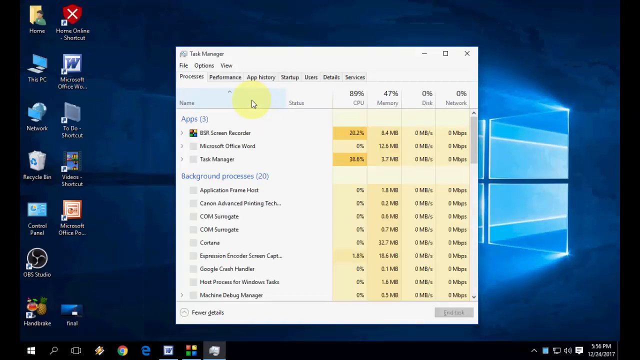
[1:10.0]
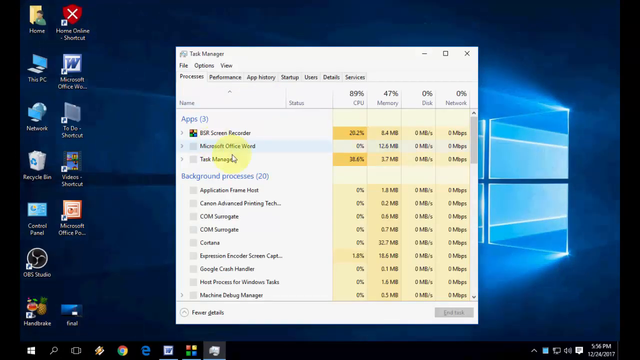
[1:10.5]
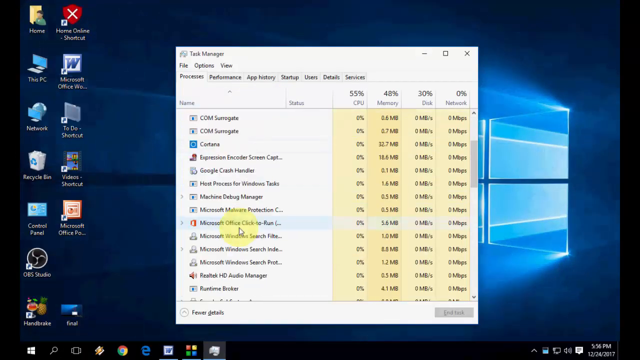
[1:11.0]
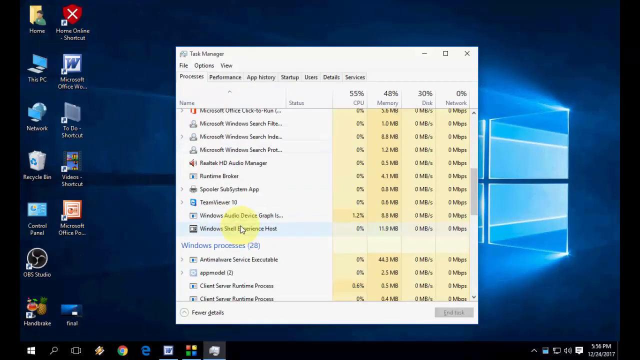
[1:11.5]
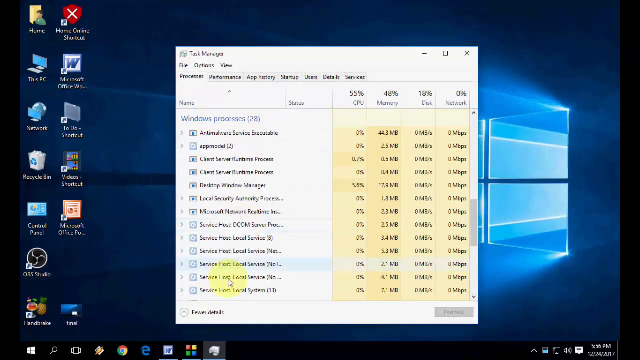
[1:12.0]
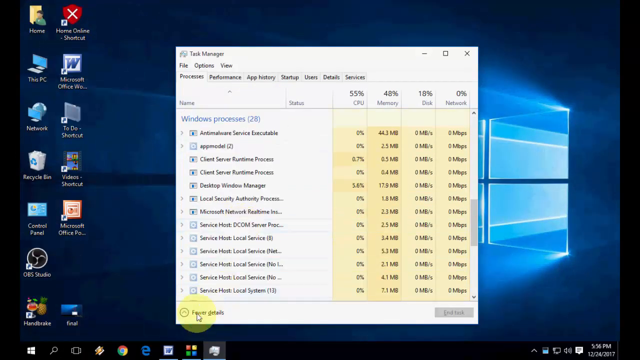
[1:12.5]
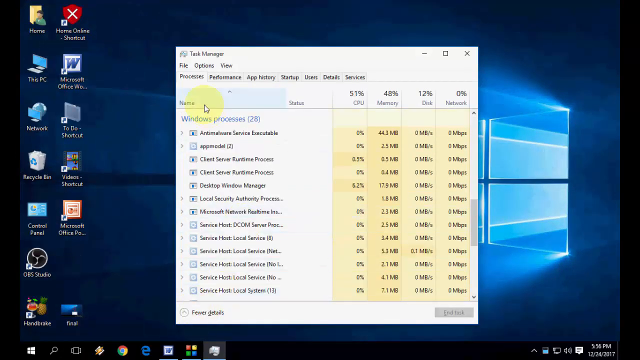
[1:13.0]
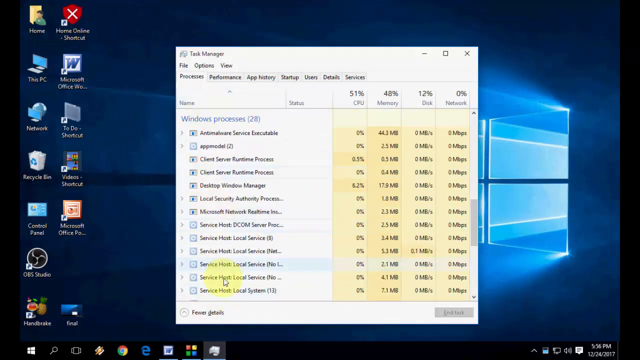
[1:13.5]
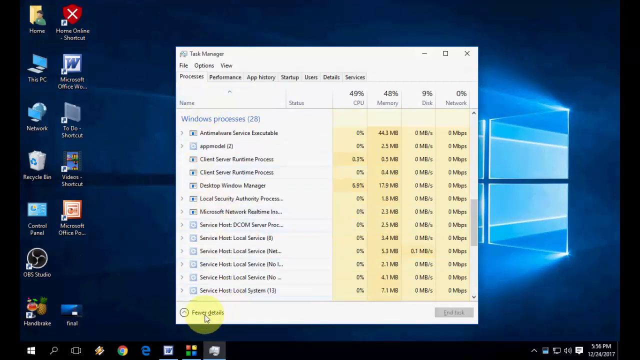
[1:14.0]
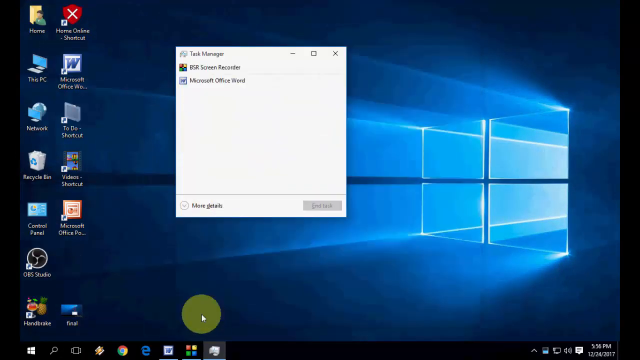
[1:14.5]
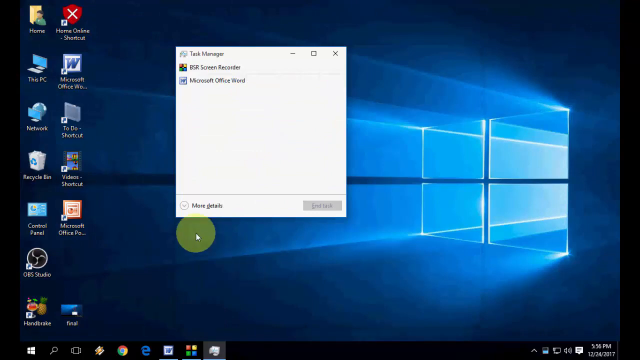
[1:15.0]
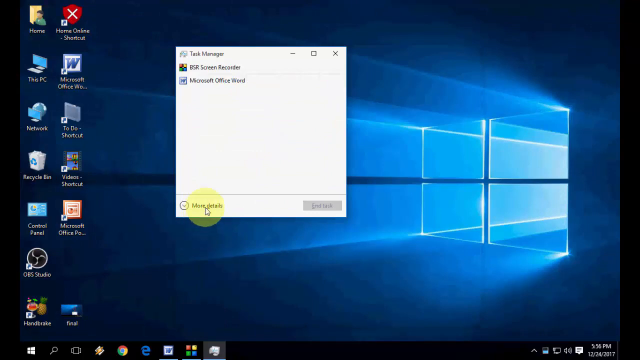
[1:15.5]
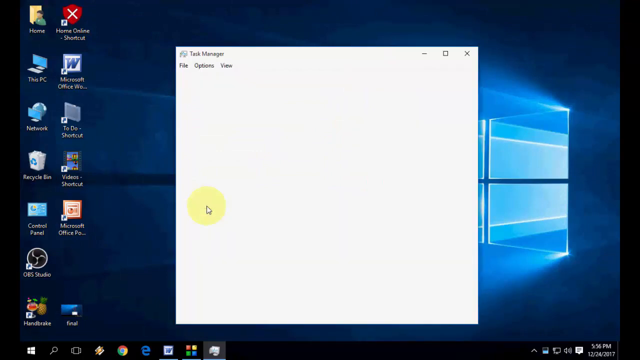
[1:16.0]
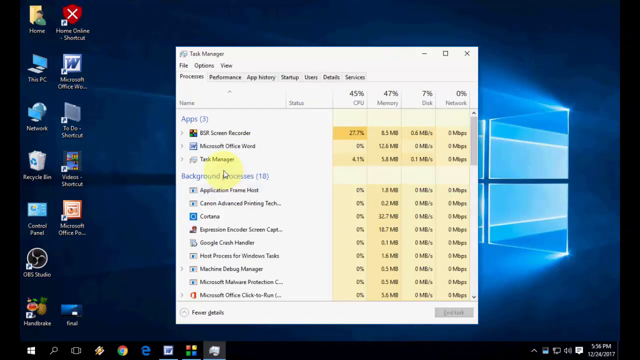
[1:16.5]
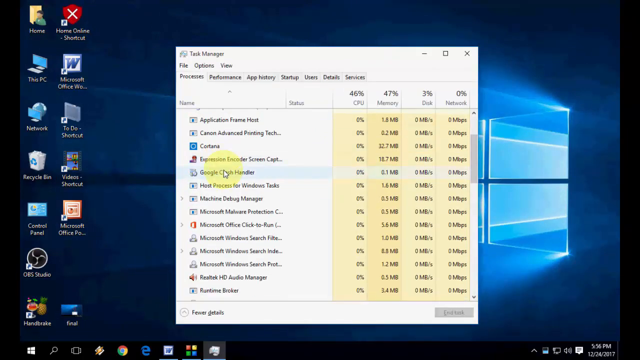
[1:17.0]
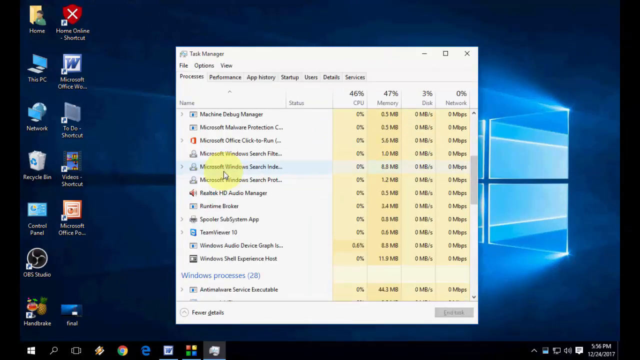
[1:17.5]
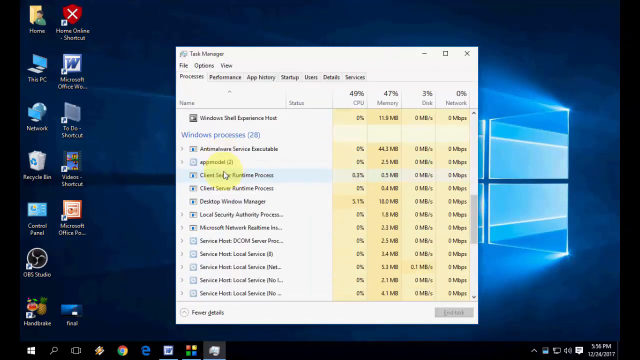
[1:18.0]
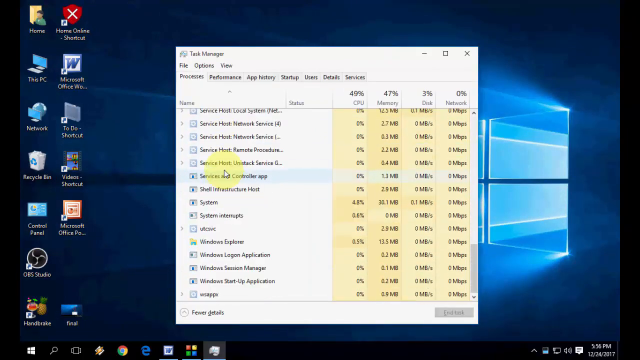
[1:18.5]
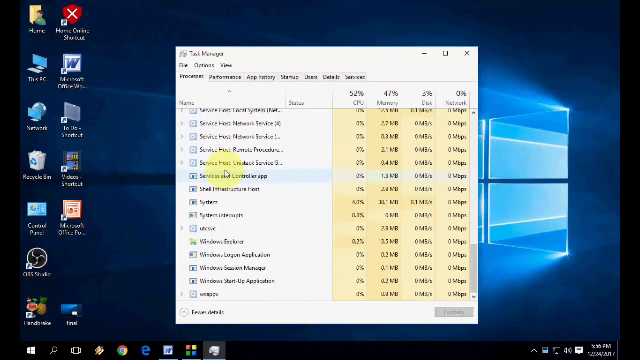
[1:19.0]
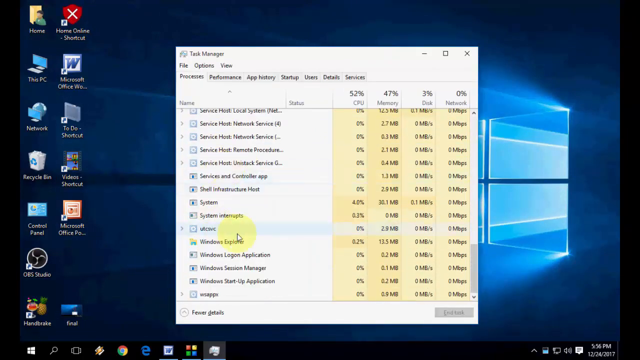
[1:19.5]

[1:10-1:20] With Task Manager open, the user goes through the processes running on the computer and stops at Windows processes, which number 28. He clicks on Fewer details, then on More details. He then scrolls down to a section of Windows services.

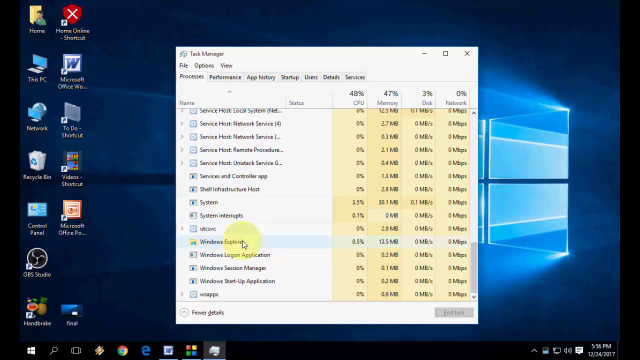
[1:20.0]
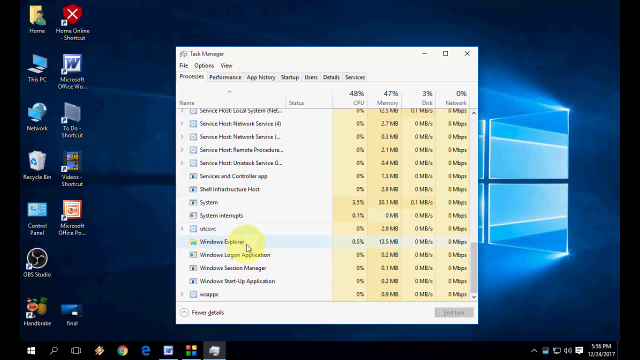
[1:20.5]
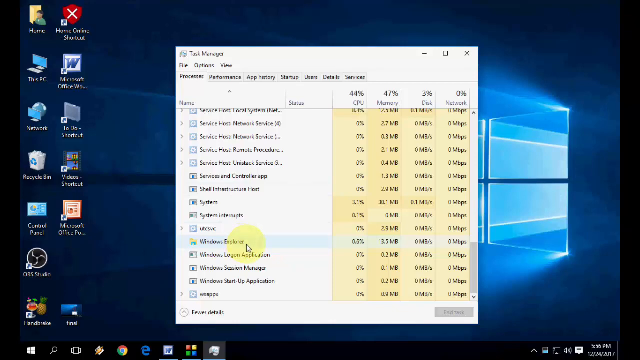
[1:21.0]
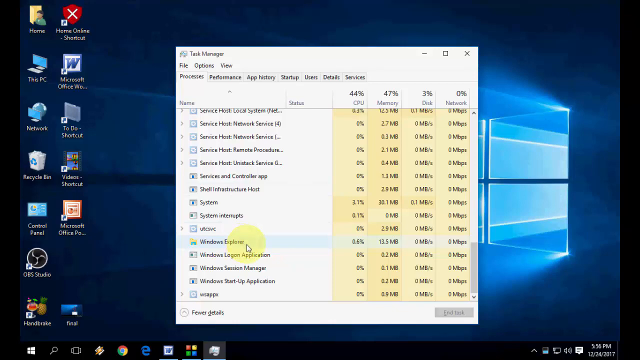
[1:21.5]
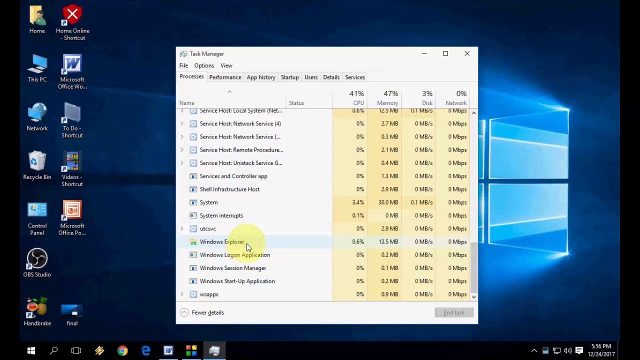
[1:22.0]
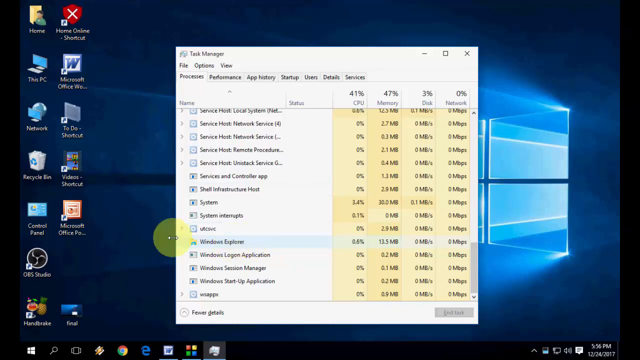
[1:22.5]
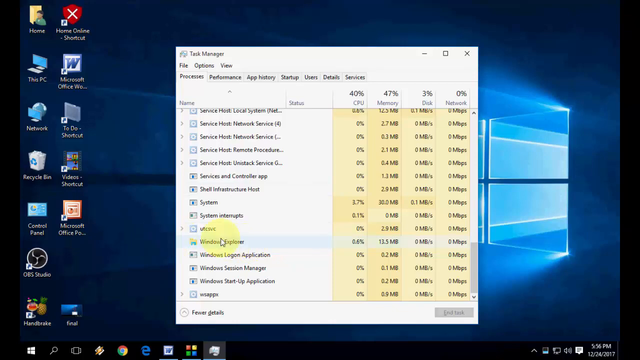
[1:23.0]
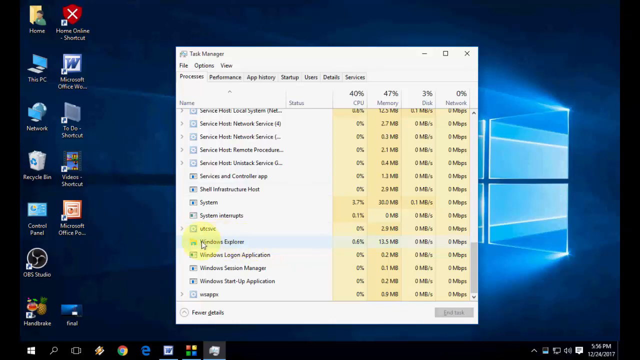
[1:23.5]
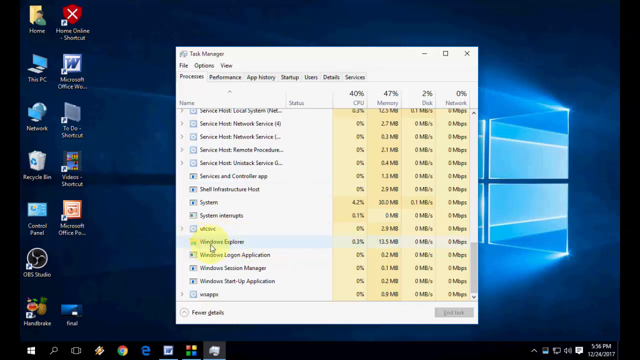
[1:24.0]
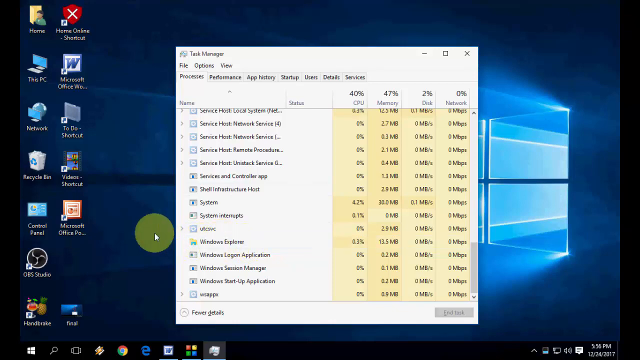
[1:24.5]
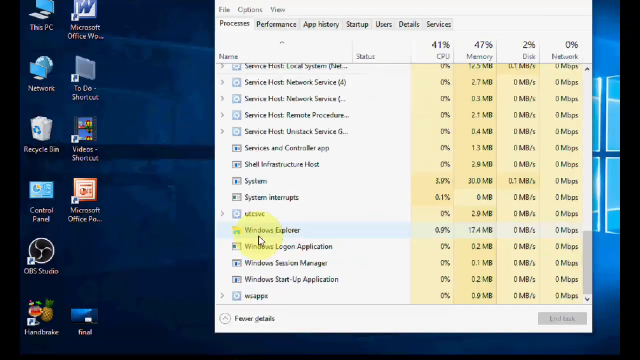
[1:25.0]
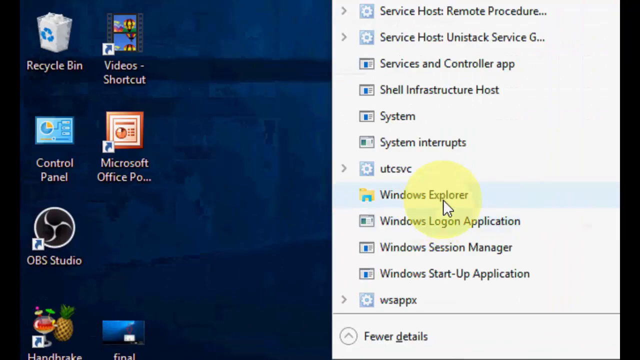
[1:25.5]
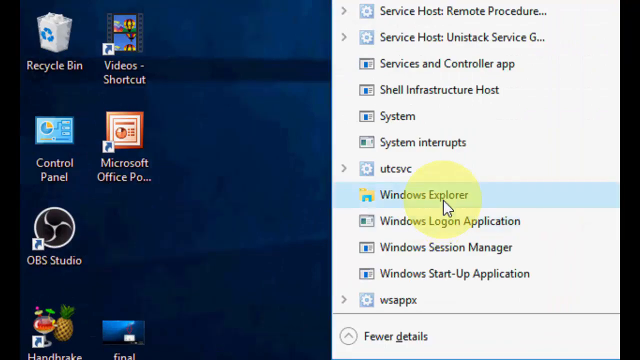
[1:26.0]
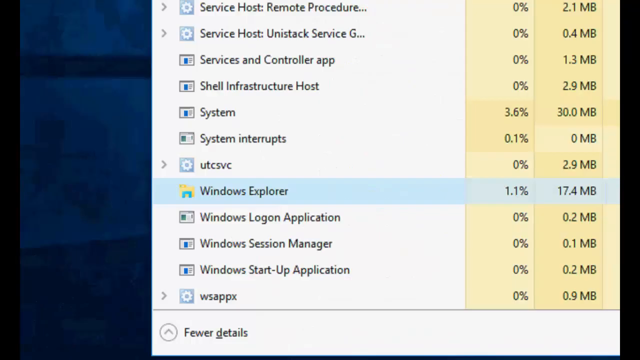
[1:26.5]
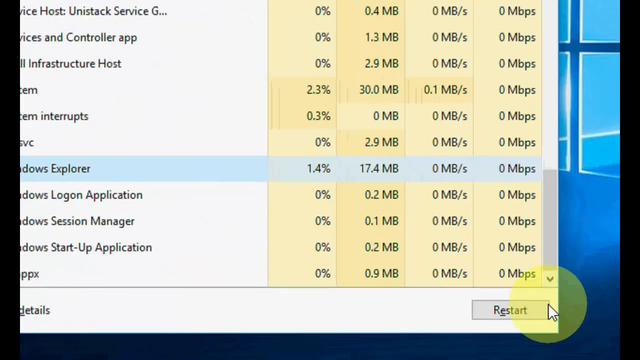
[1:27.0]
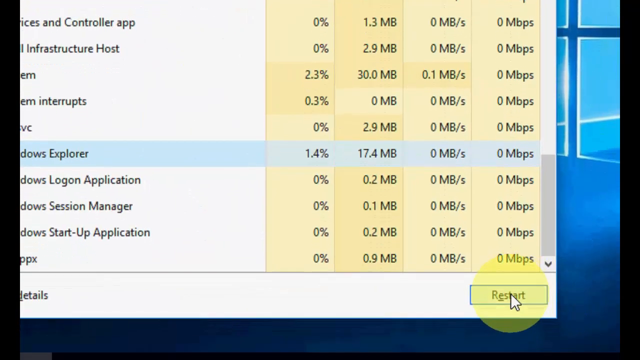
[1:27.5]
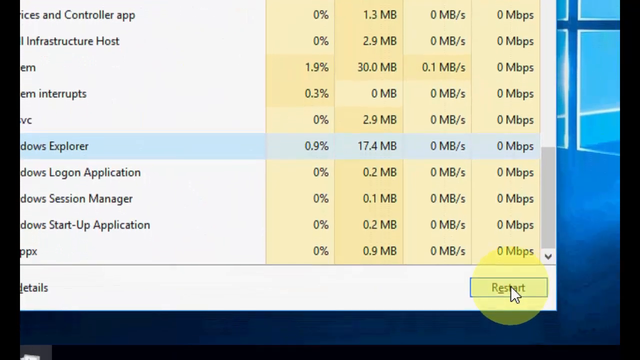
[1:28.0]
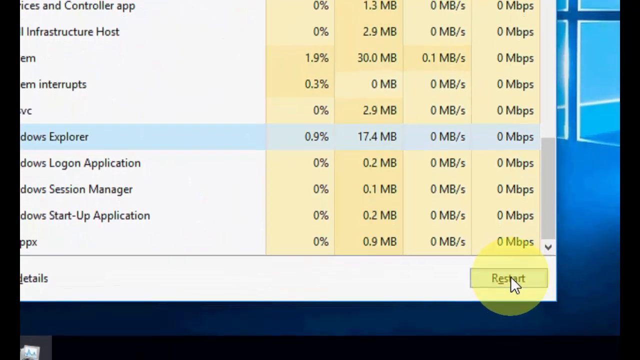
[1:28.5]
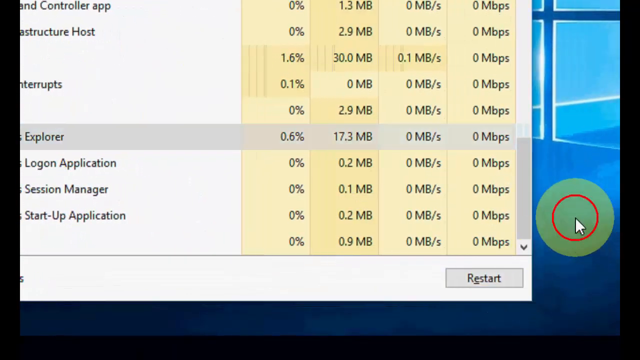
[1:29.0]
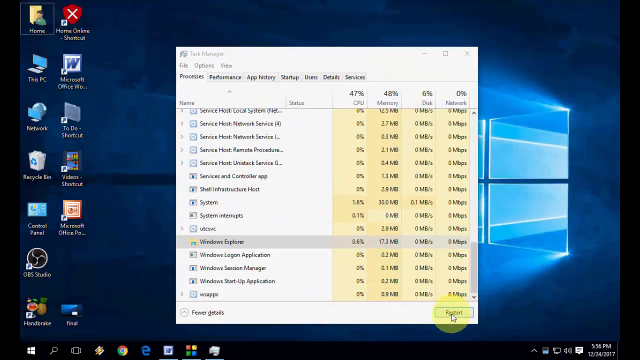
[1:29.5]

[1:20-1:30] In Task Manager, the user reaches Windows Explorer among the Windows services. He scrolls to it, clicks on the Windows Explorer service, and then clicks End Task, ending the task.